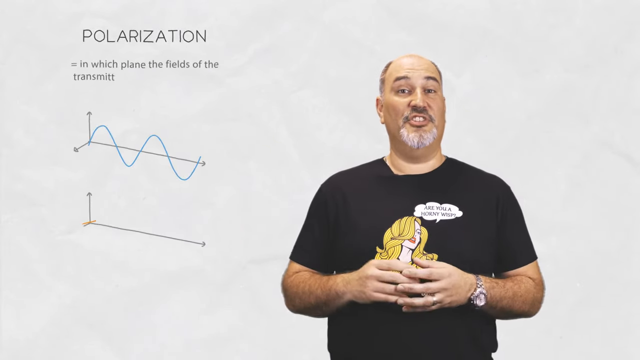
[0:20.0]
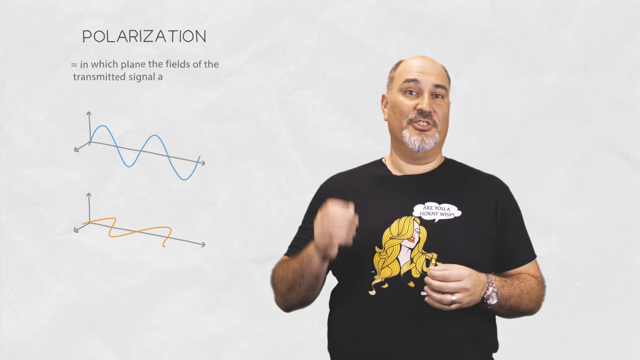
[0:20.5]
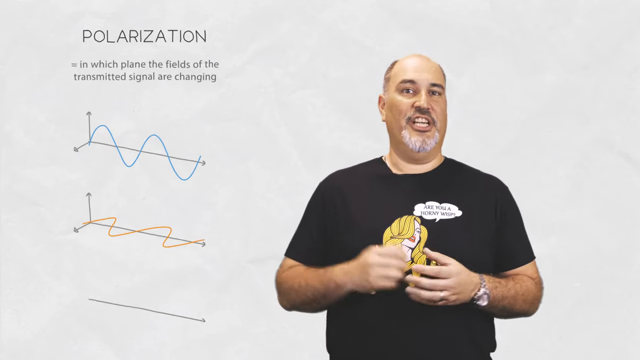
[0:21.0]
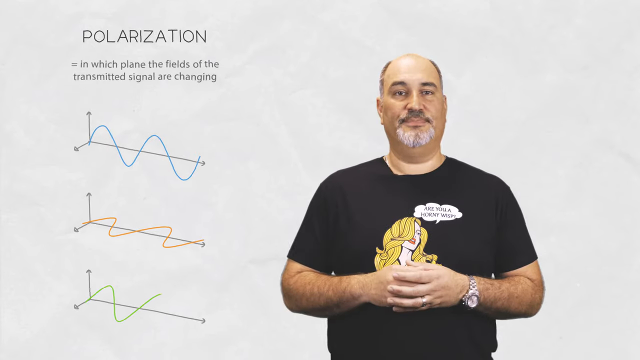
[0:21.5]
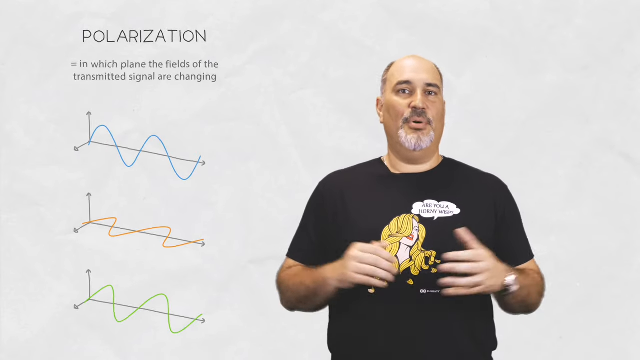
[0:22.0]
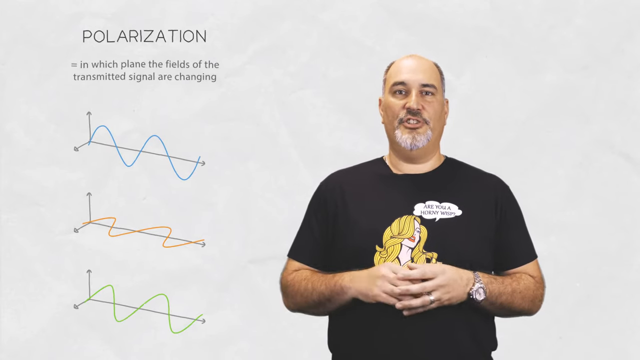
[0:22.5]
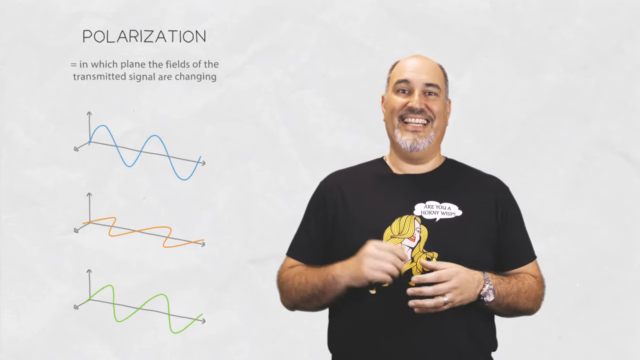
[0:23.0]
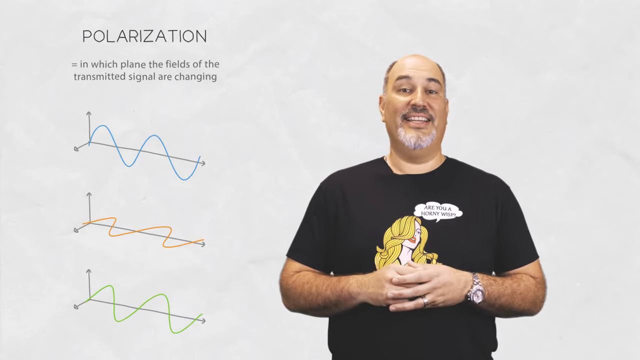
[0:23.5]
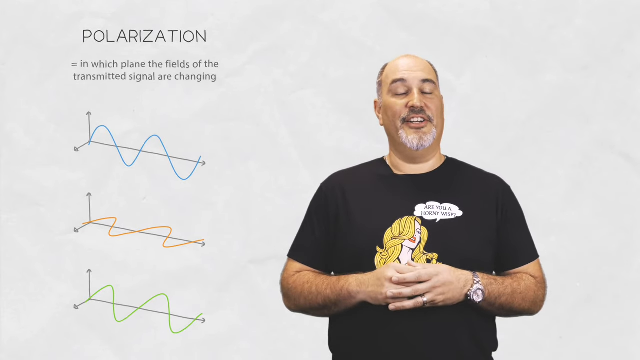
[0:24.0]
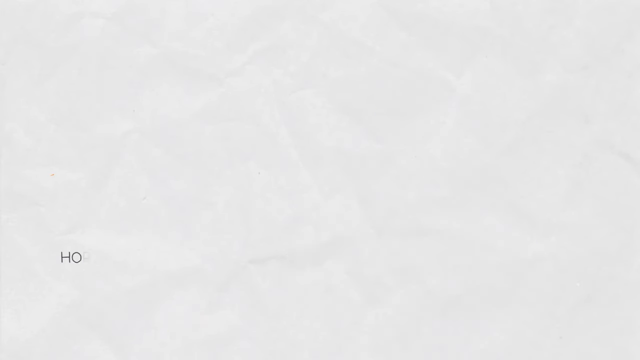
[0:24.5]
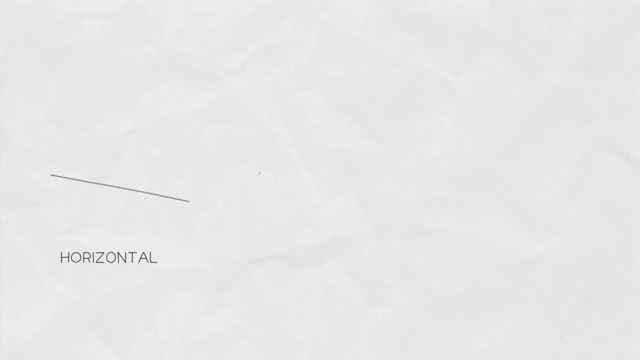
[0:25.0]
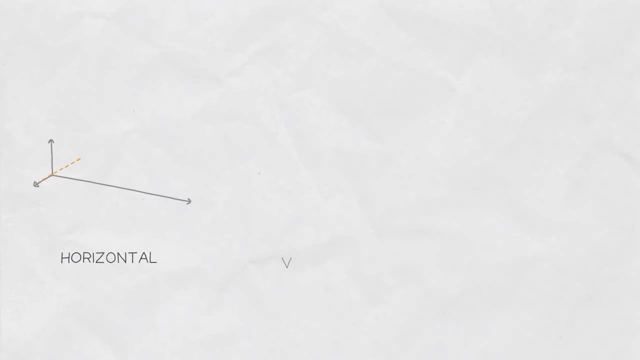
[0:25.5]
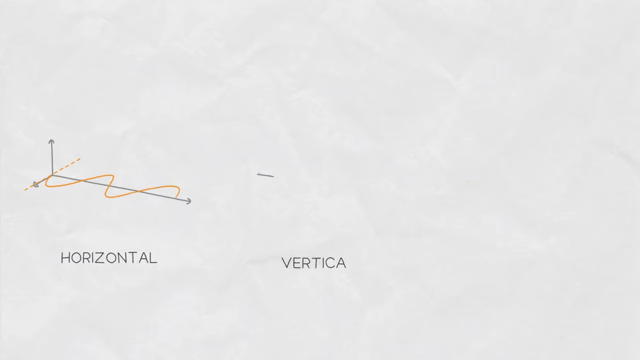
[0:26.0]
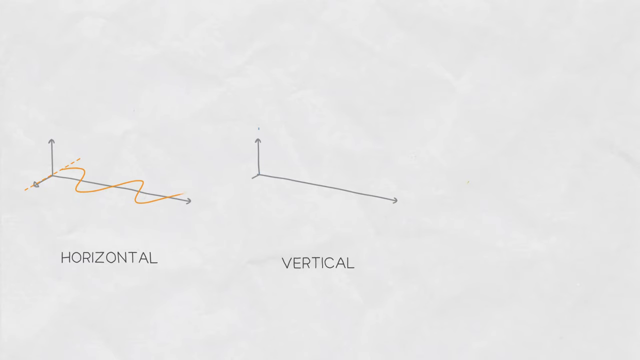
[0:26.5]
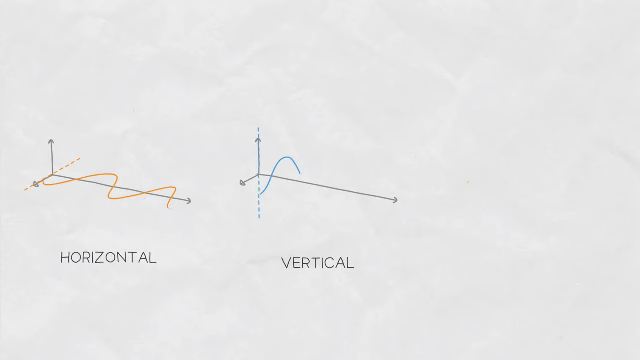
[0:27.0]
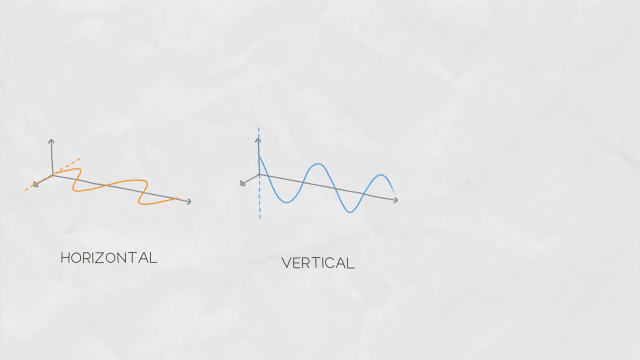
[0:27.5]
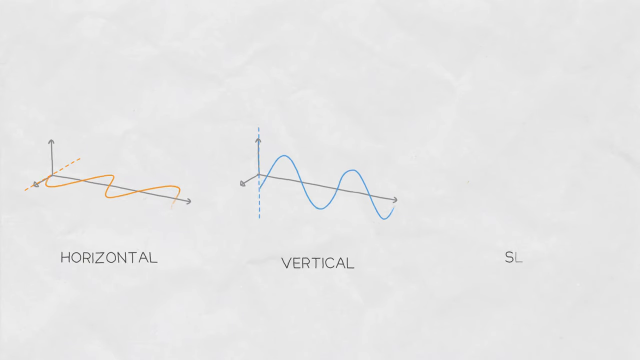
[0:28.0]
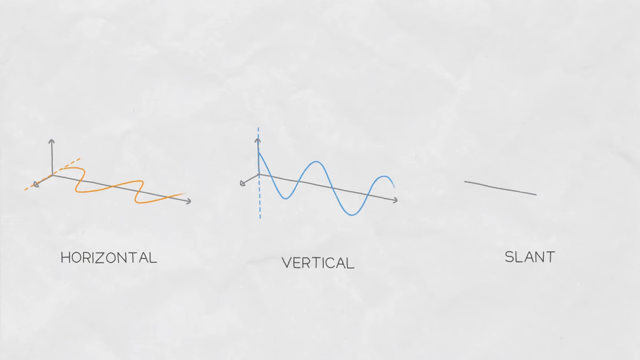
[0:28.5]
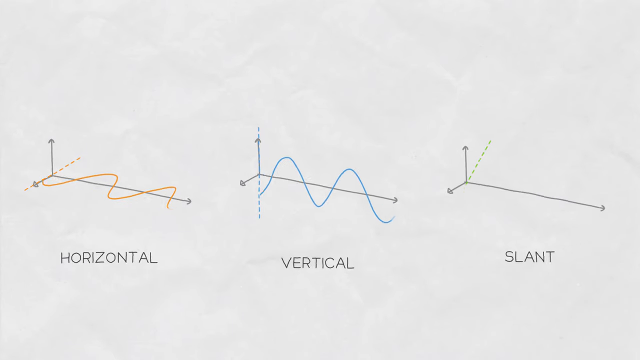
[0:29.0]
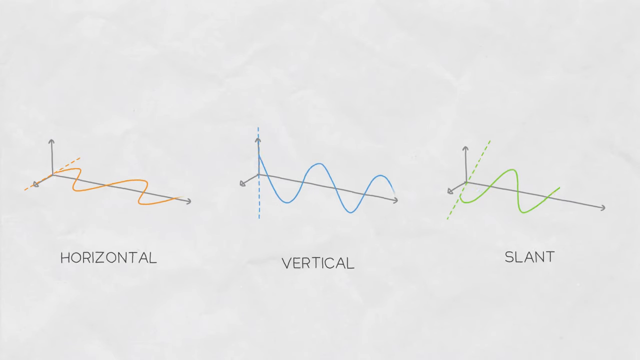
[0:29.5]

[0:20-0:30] The man talks in front of a sentence behind him that reads "polarization in which plane the fields of the transmitted signal are changing," and some signs appear below the sentence. He continues talking energetically, lifting his hands up and down and looking directly at the camera. Horizontal, vertical and slanted lines then appear on screen: three types of shapes, one horizontal, one vertical and one slanted. The man is seen talking again, along with the horizontal, vertical and slanted lines.